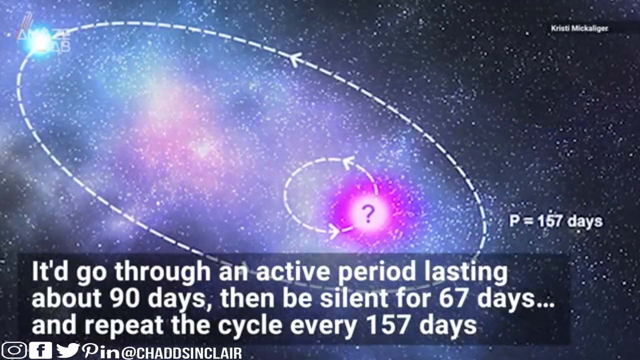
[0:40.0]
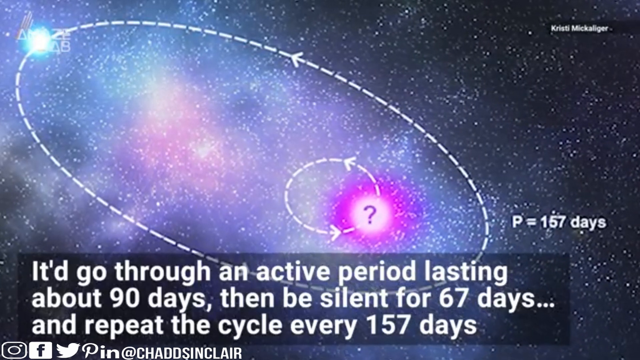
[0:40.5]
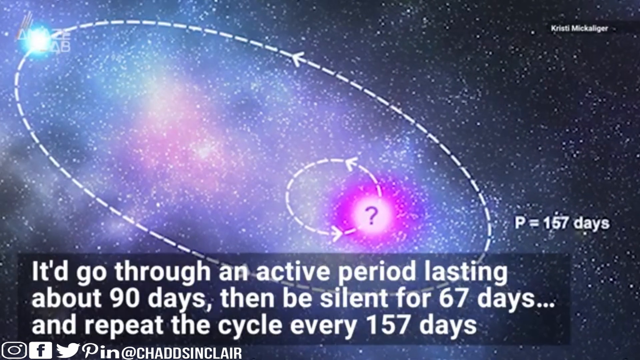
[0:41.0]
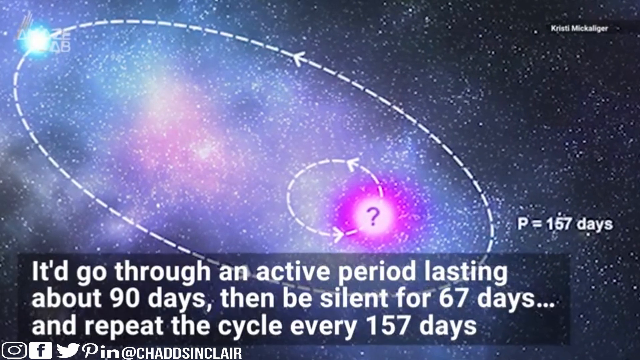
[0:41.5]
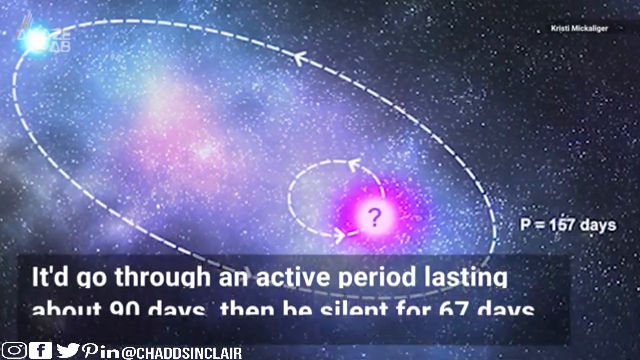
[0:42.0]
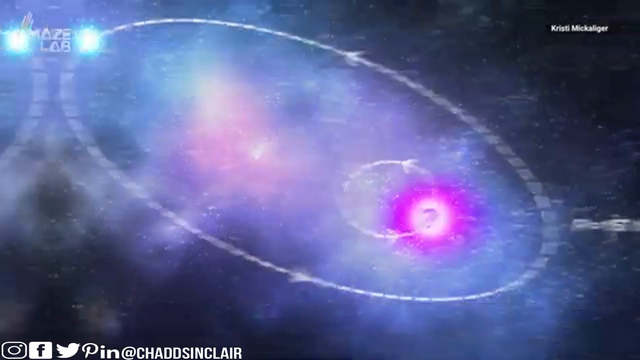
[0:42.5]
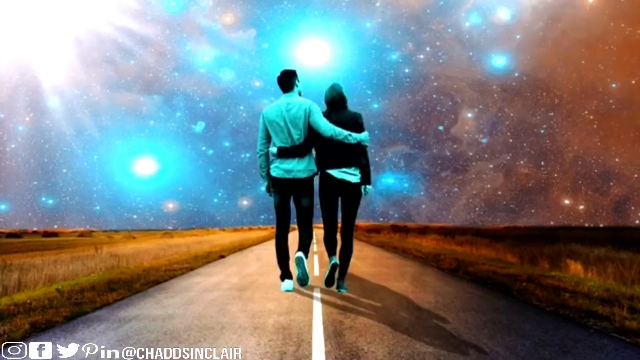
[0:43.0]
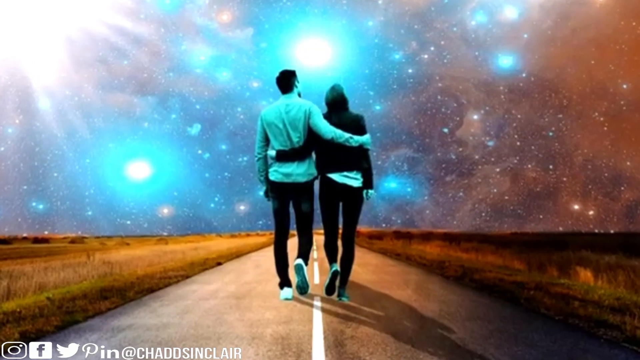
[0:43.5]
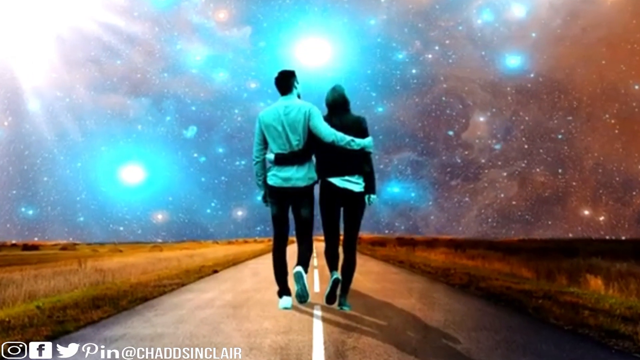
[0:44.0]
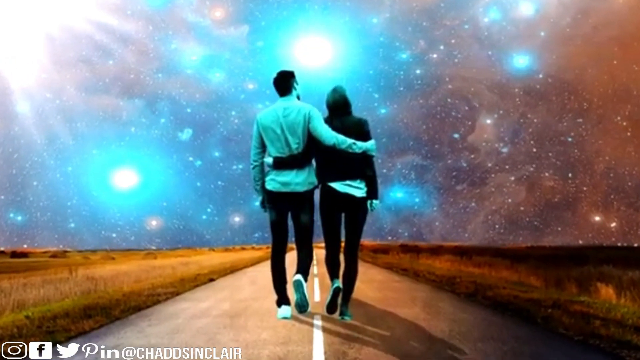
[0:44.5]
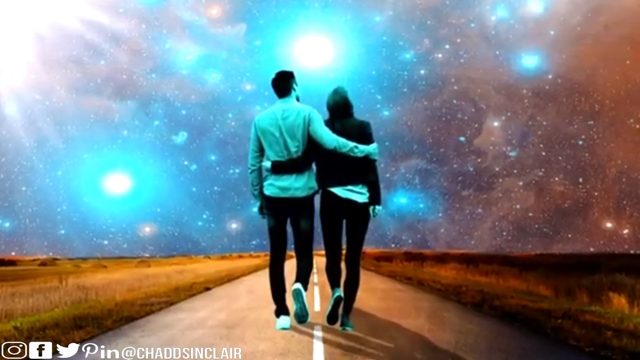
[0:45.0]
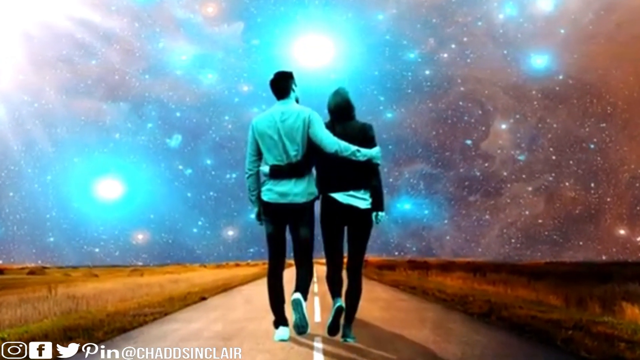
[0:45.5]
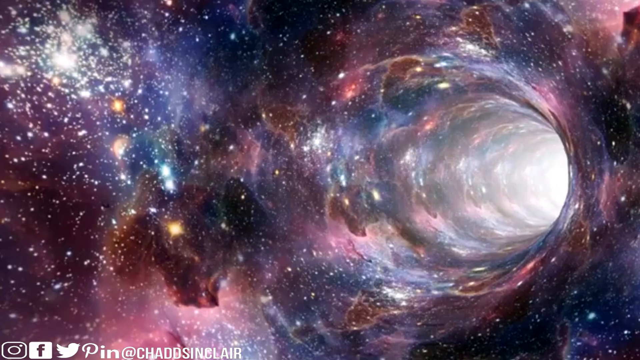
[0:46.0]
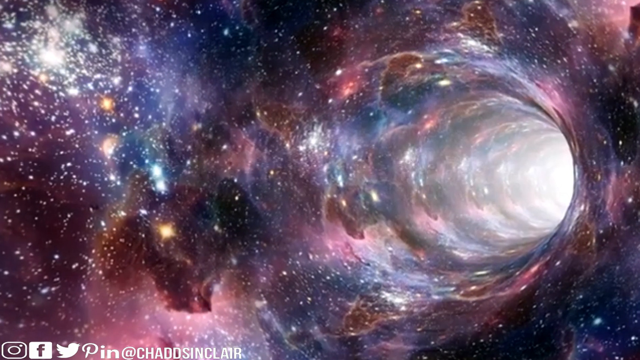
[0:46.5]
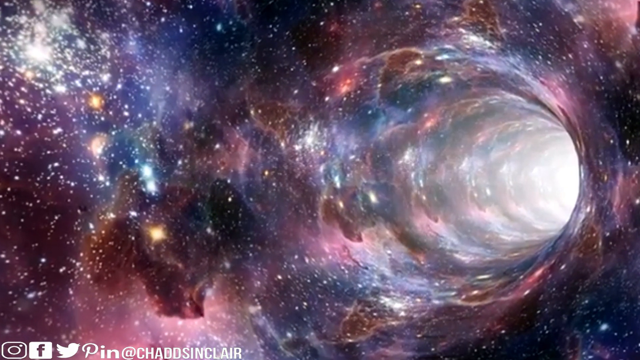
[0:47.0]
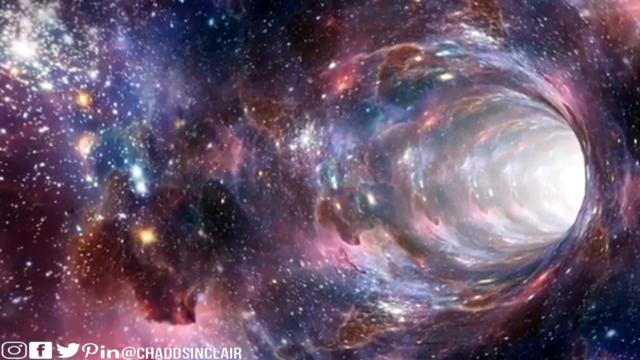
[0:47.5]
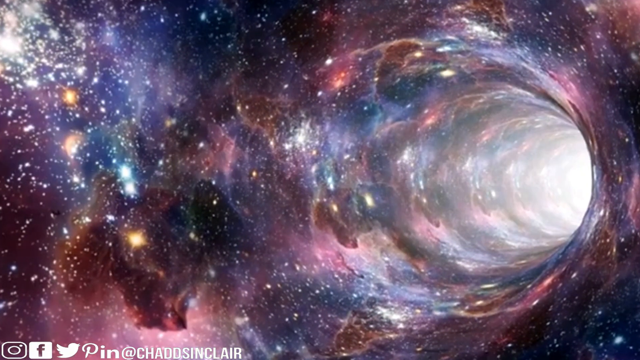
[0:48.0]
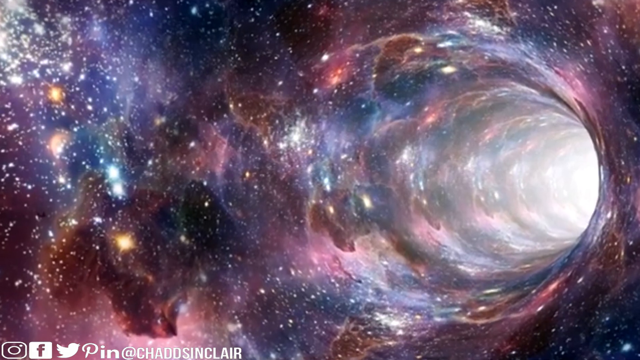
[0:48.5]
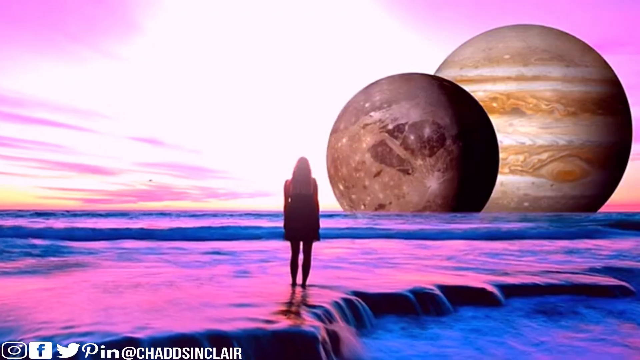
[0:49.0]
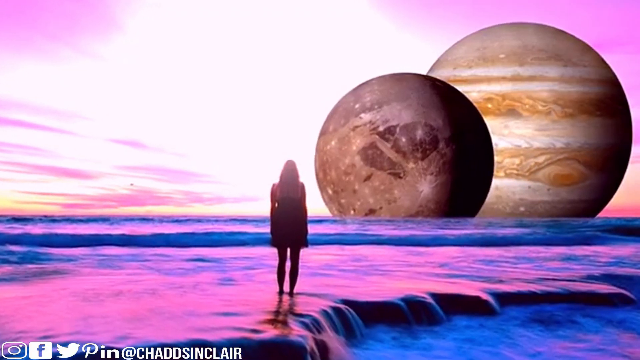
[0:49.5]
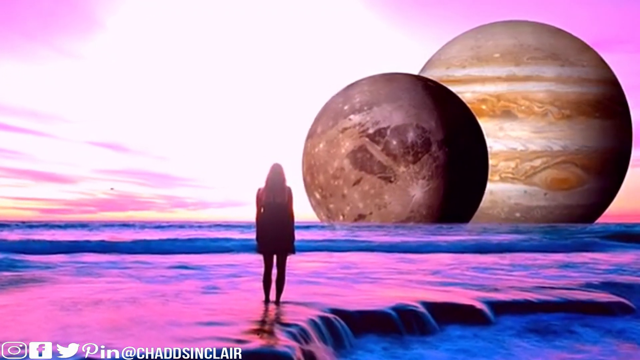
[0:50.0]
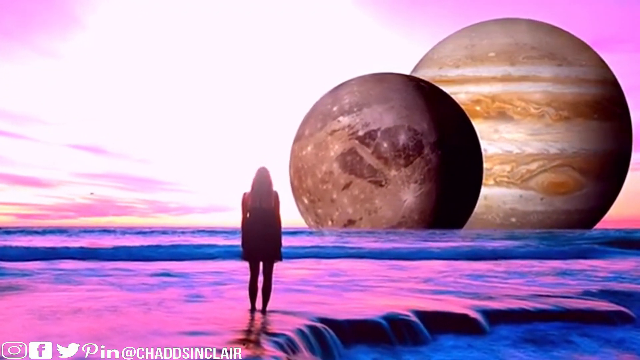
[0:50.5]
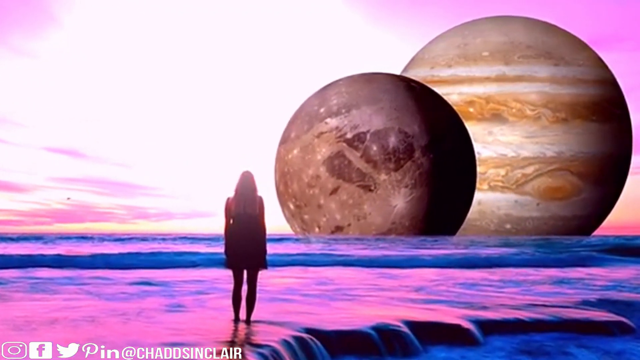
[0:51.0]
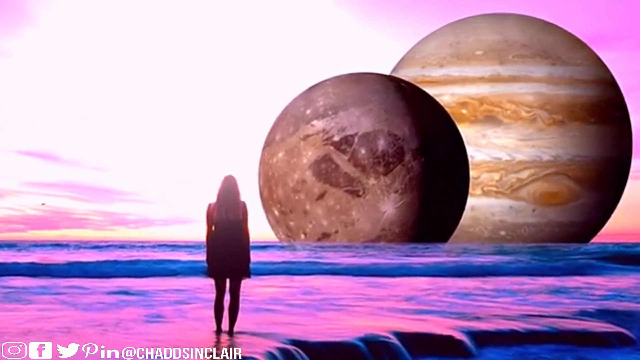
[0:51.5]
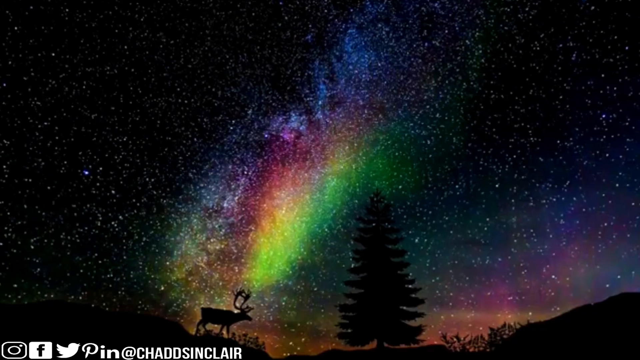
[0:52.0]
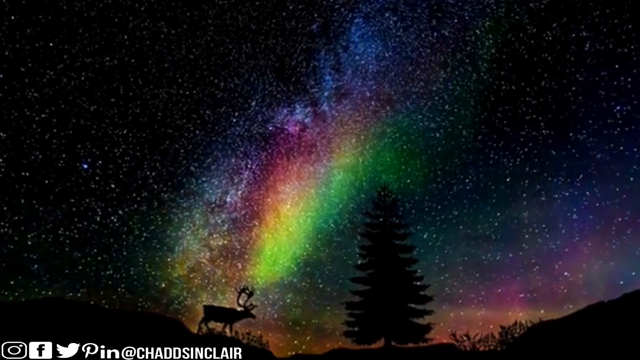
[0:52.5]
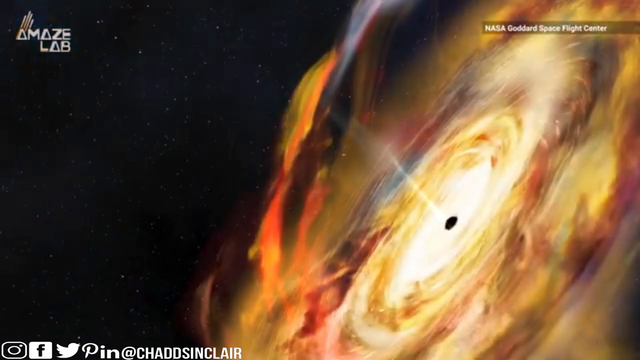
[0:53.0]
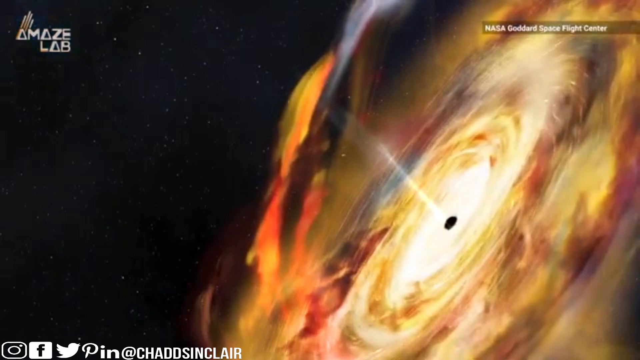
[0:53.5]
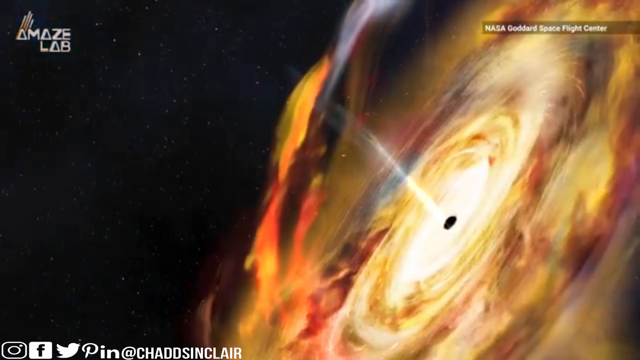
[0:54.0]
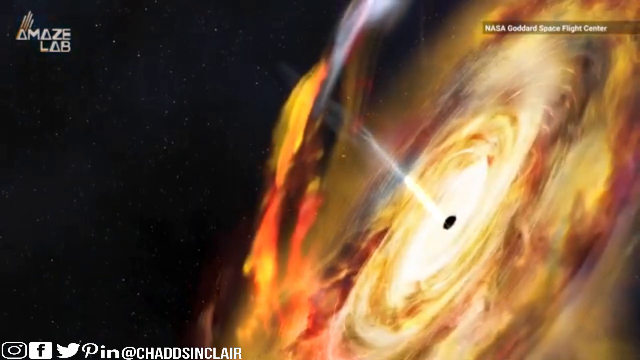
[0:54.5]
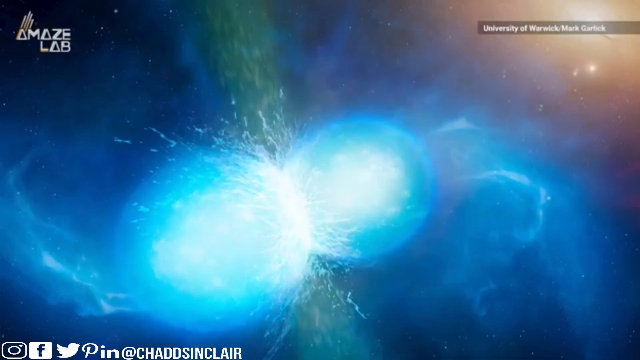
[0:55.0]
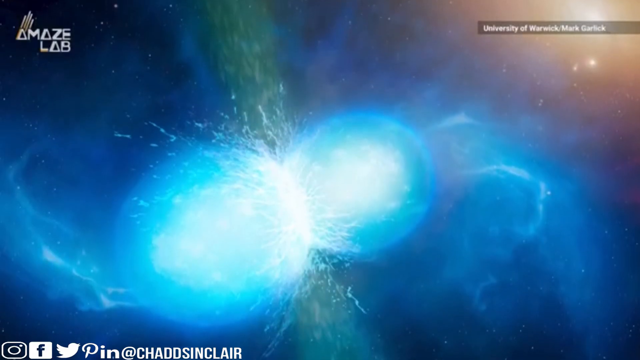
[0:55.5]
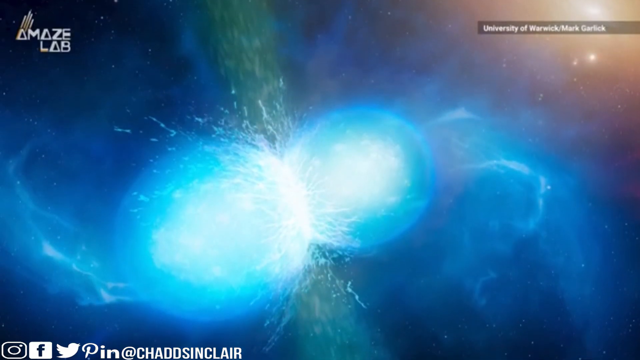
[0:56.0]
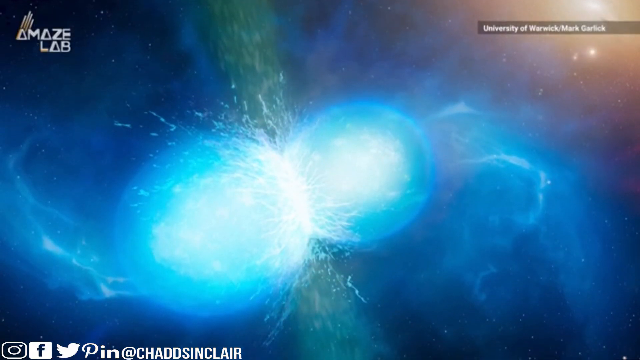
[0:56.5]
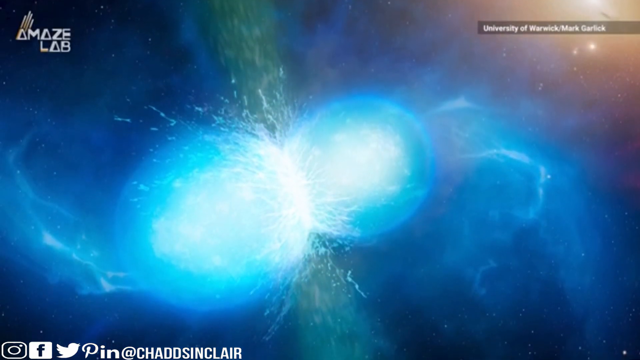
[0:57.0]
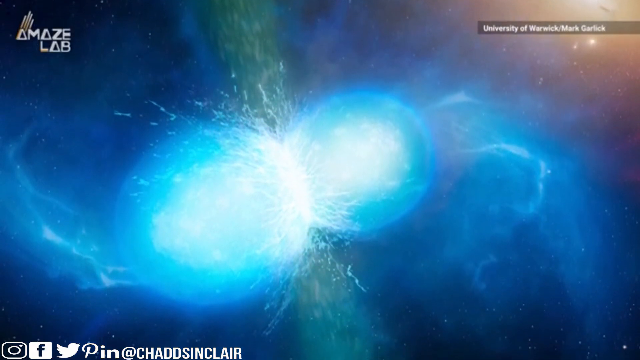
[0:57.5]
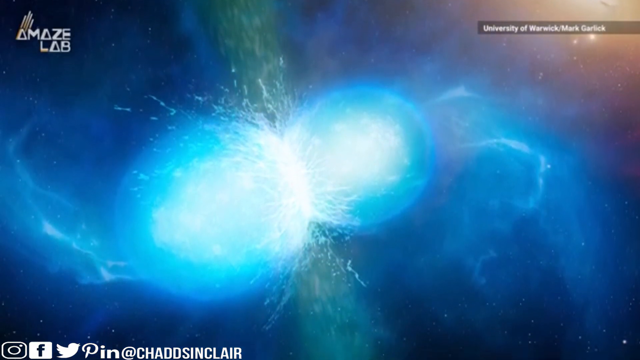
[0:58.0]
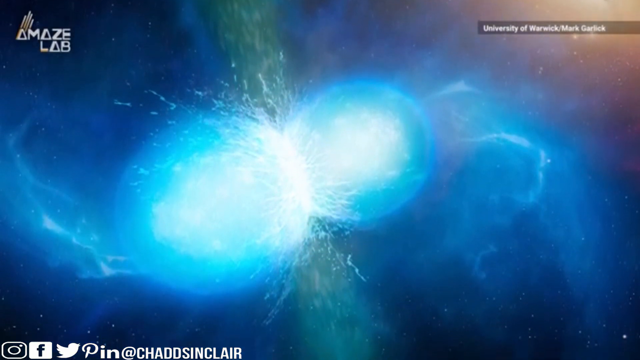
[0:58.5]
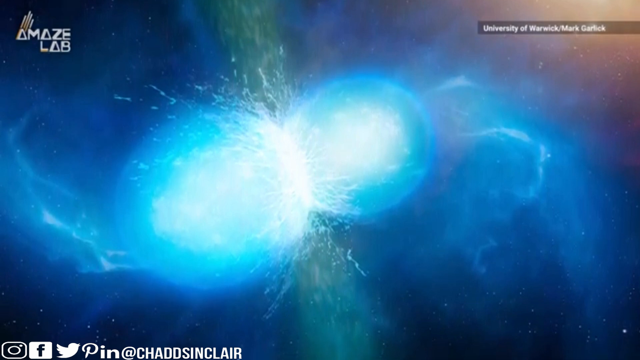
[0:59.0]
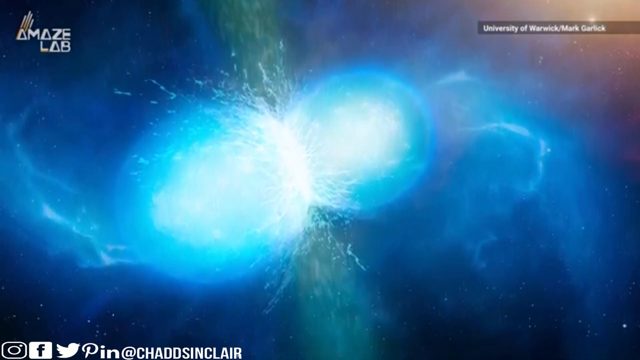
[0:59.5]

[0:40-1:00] The galaxy has purple-ish tones and sits within a dotted oval, with "Amaze Labs" in the upper left corner. The oval is slanted diagonally, its top pointing toward the upper left and its bottom toward the lower right. Within it is a dotted circle, and on the lower right side of the dotted circle is a bright white circle with a purple outline, along with a purple question mark. In the lower right is "PE" with "157 days", and text says "it will go through an active period". Next come two pyramids, people walking with a green tint, someone watching two planets in a purple sky, and a hole with brown and red moving around it, apparently part of the galaxy.